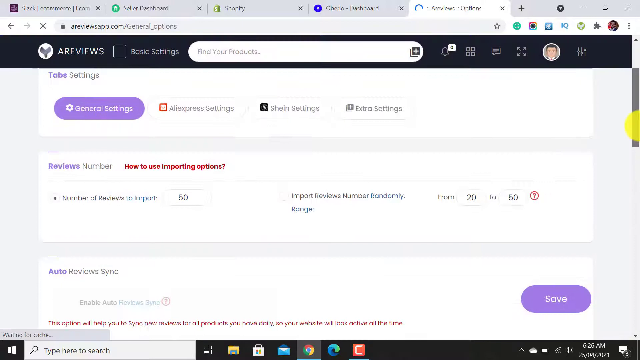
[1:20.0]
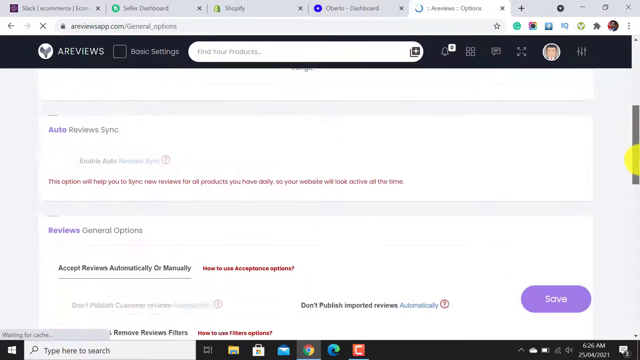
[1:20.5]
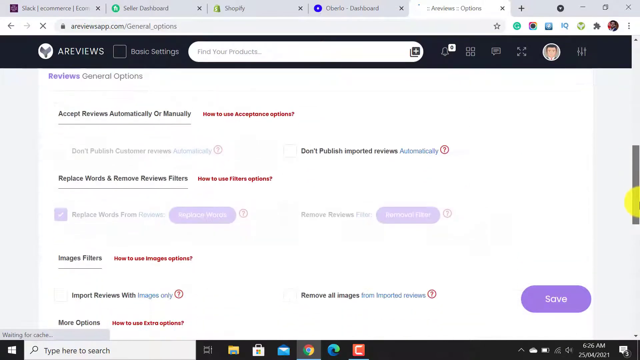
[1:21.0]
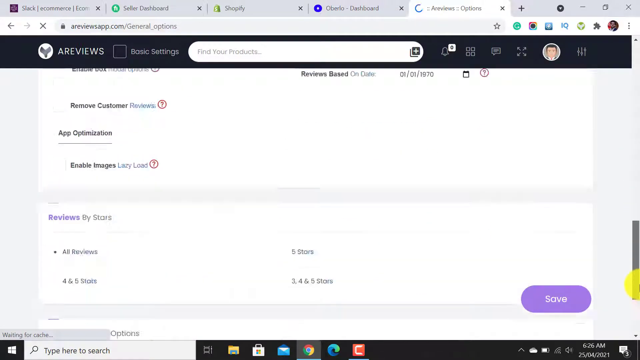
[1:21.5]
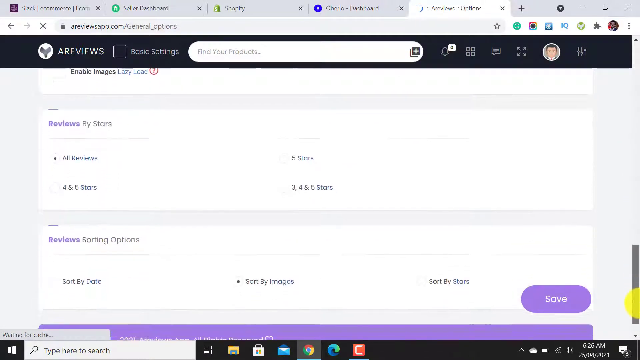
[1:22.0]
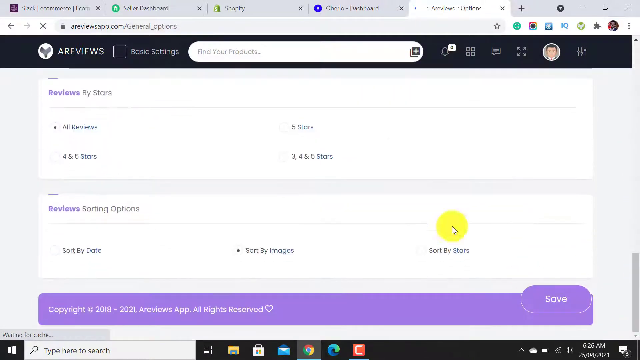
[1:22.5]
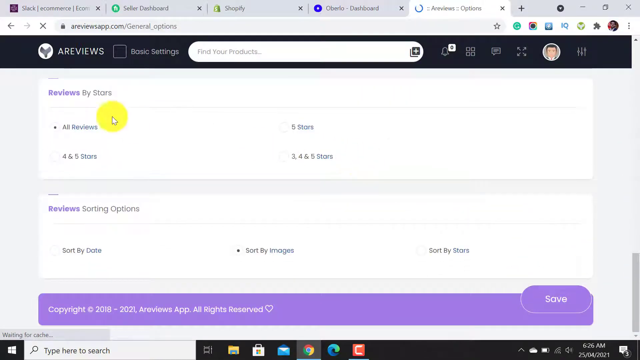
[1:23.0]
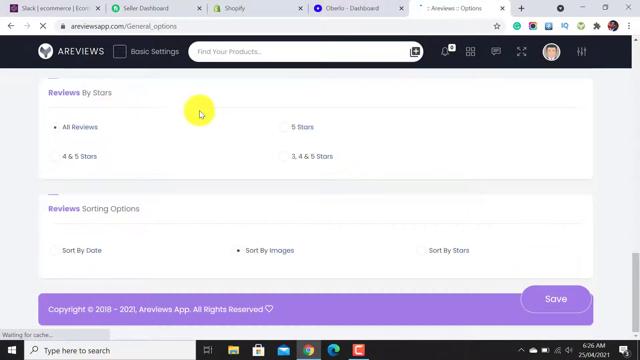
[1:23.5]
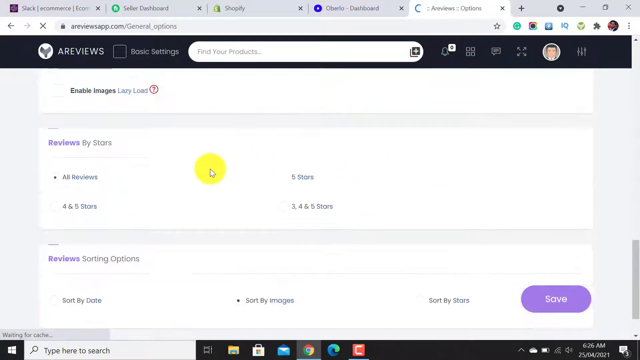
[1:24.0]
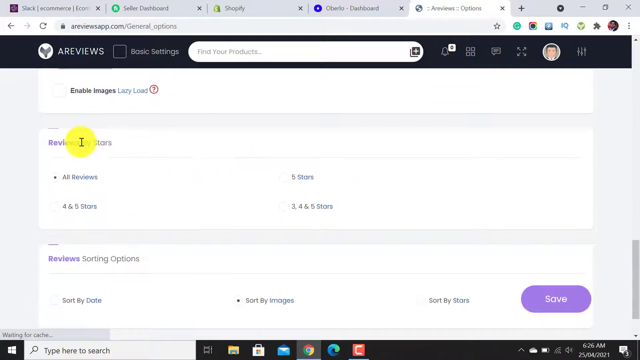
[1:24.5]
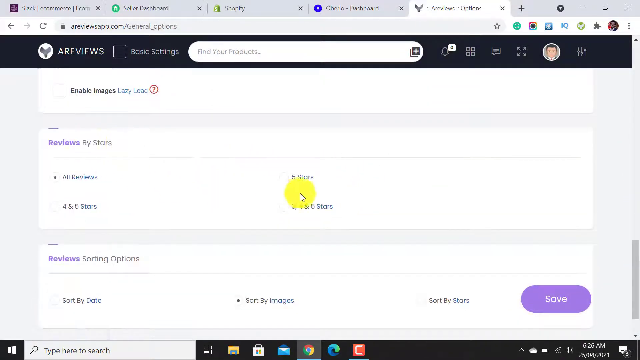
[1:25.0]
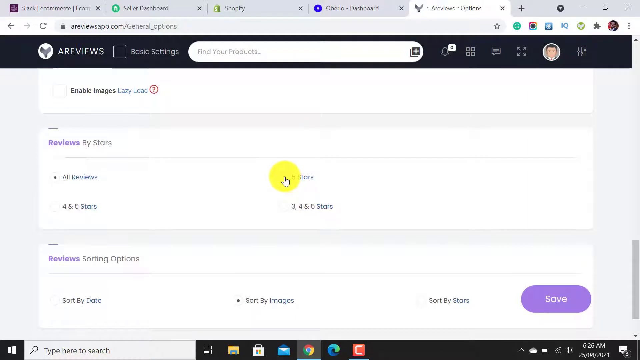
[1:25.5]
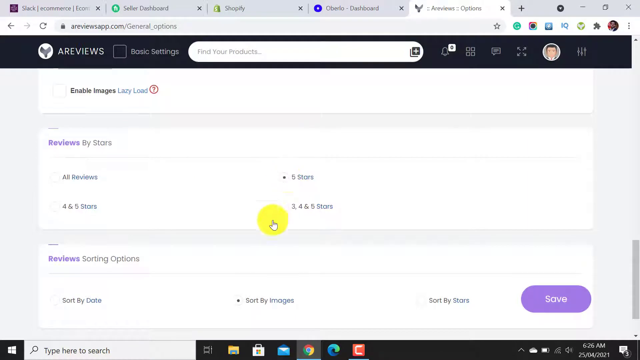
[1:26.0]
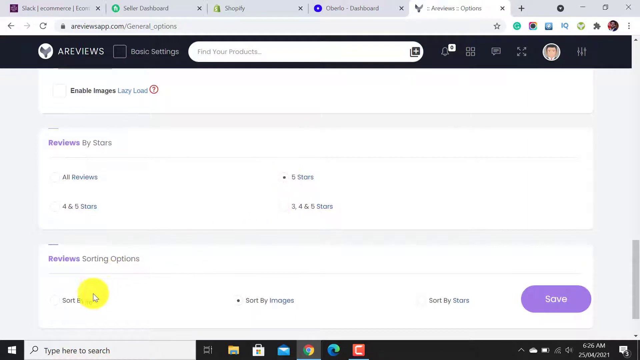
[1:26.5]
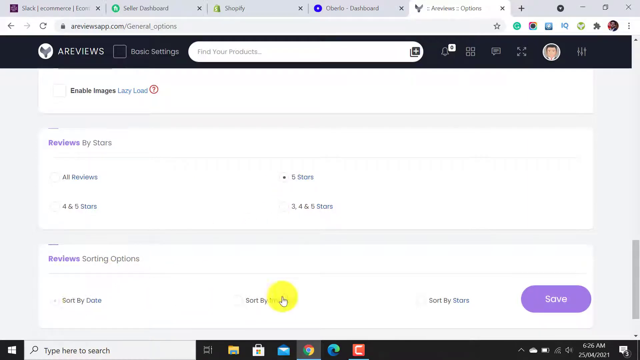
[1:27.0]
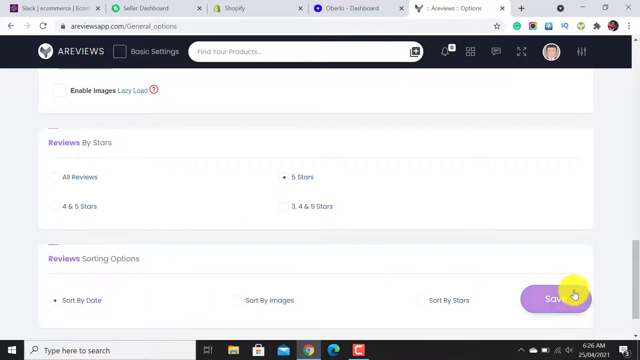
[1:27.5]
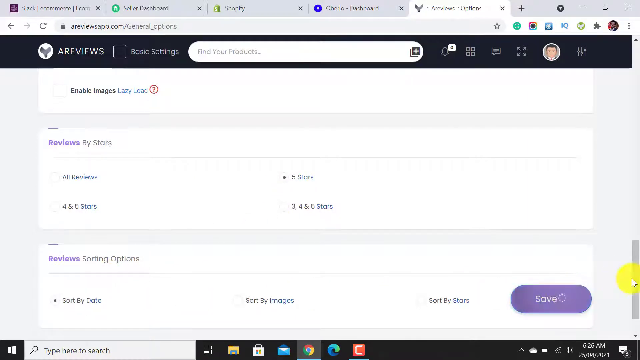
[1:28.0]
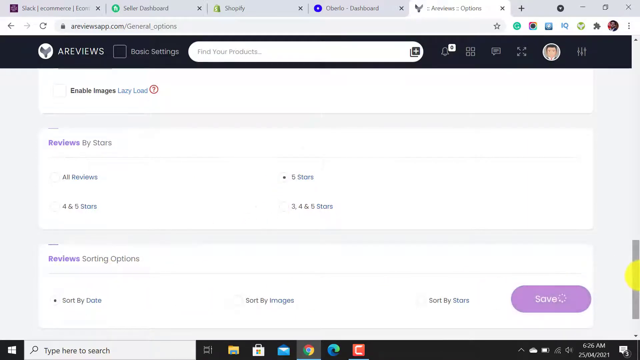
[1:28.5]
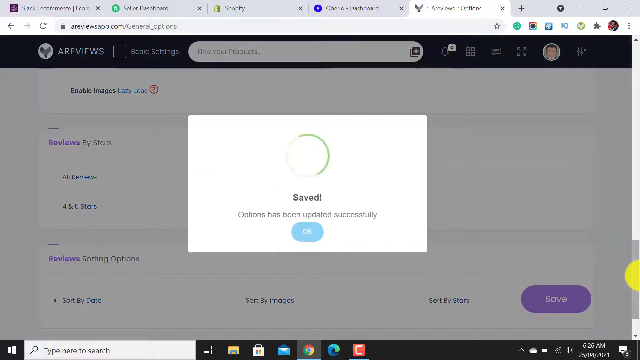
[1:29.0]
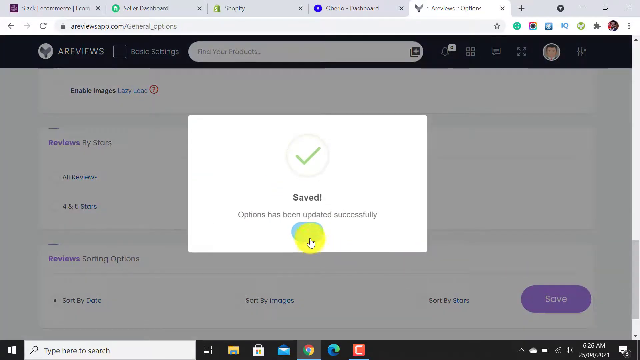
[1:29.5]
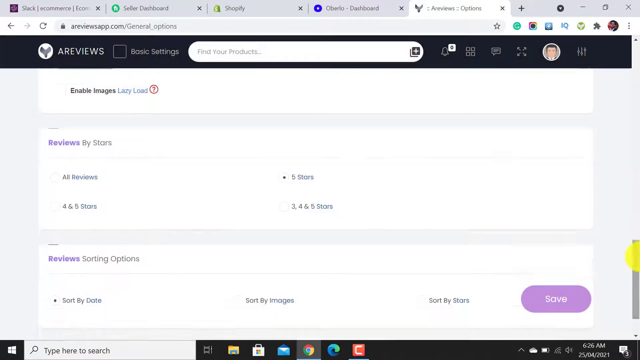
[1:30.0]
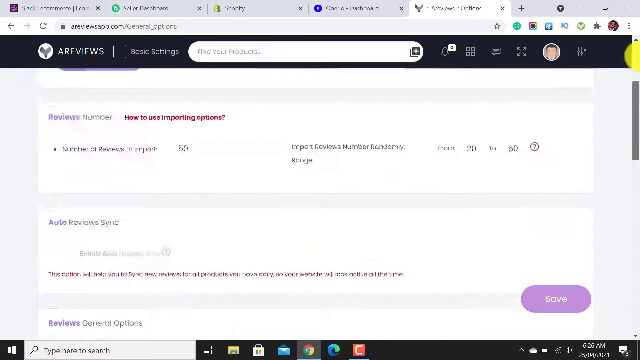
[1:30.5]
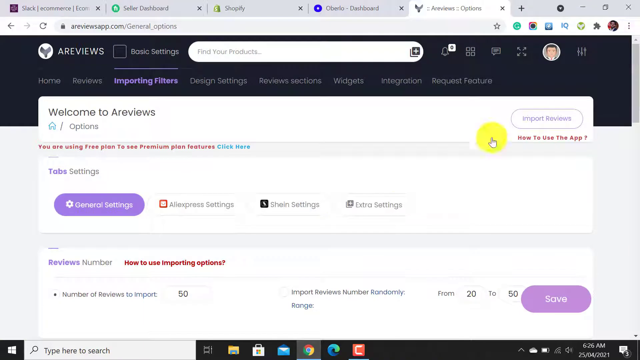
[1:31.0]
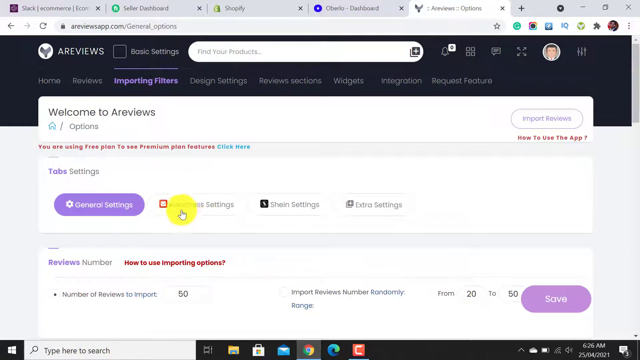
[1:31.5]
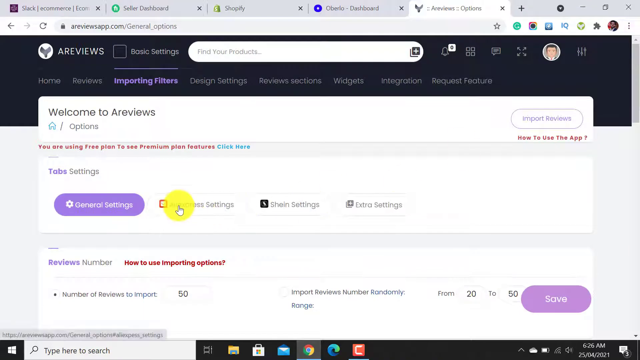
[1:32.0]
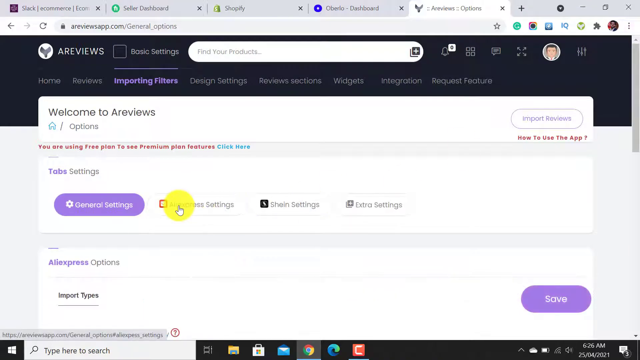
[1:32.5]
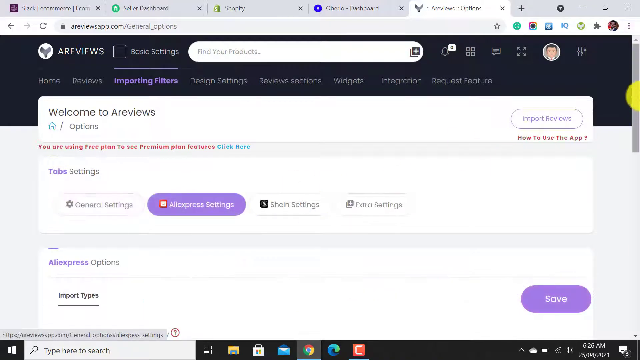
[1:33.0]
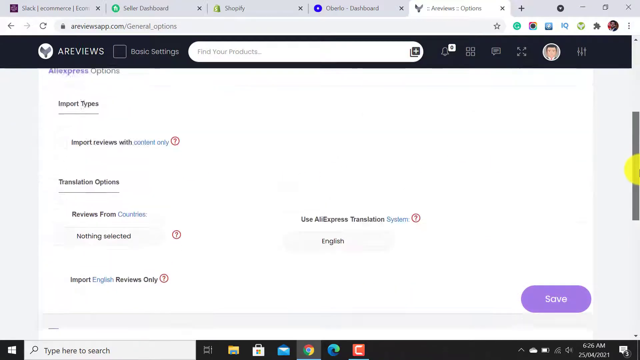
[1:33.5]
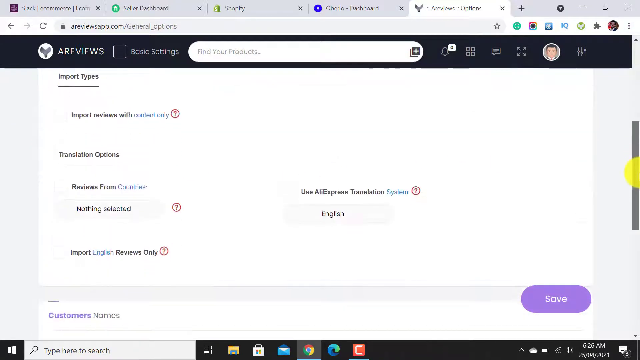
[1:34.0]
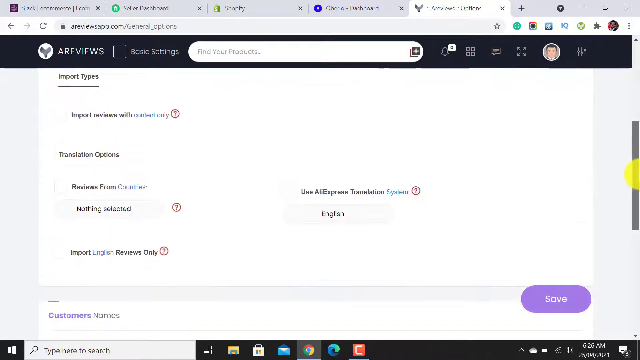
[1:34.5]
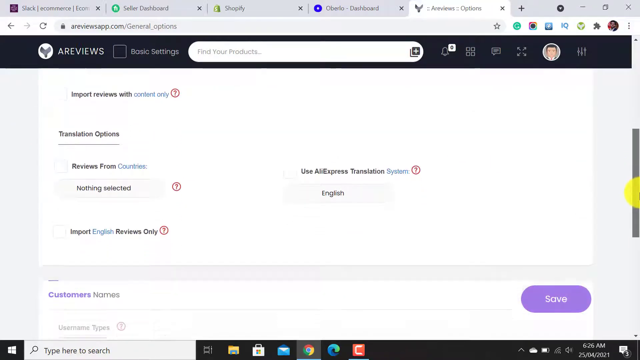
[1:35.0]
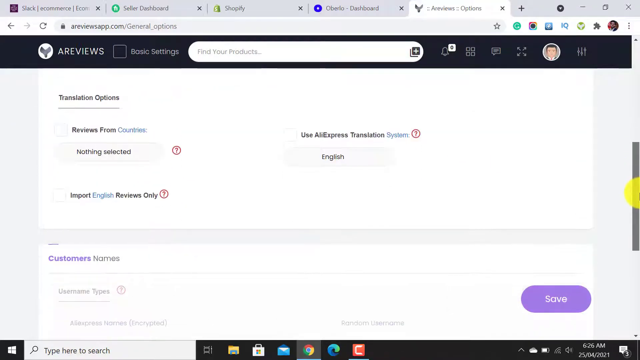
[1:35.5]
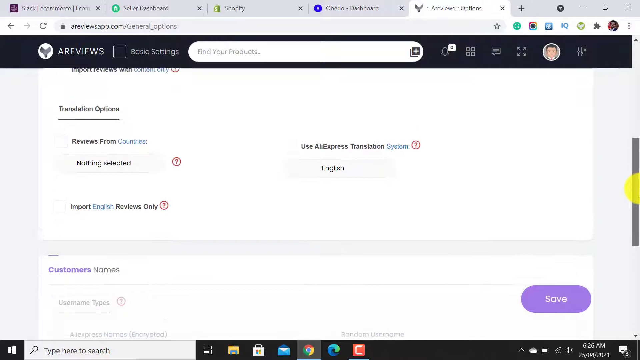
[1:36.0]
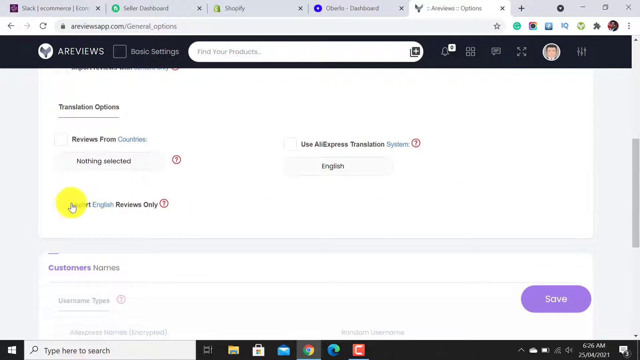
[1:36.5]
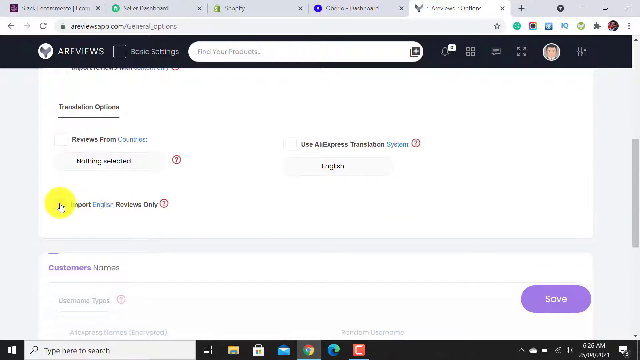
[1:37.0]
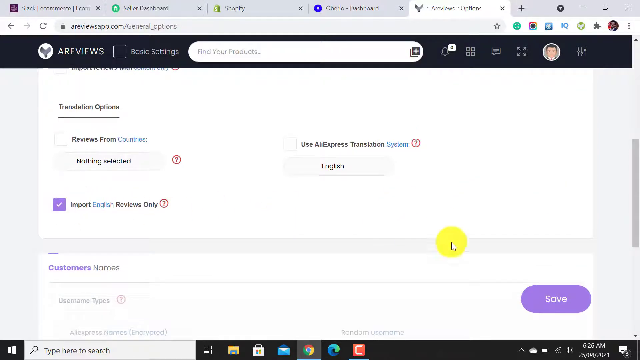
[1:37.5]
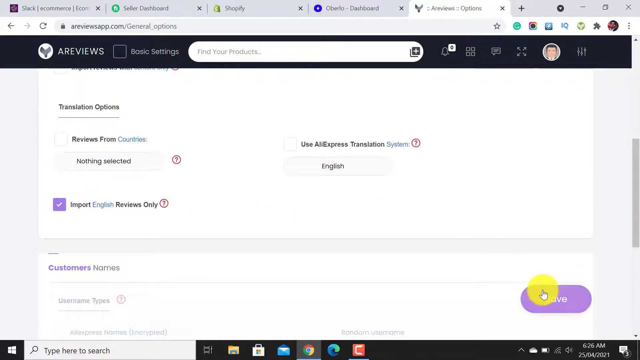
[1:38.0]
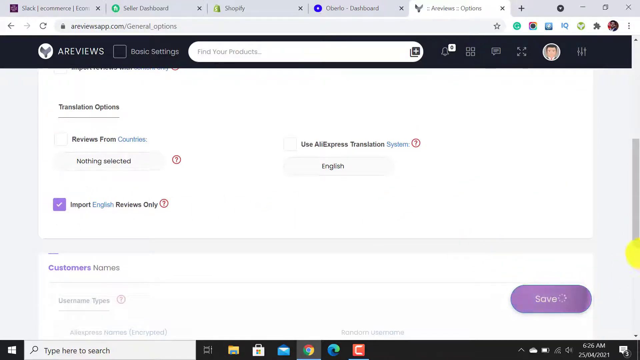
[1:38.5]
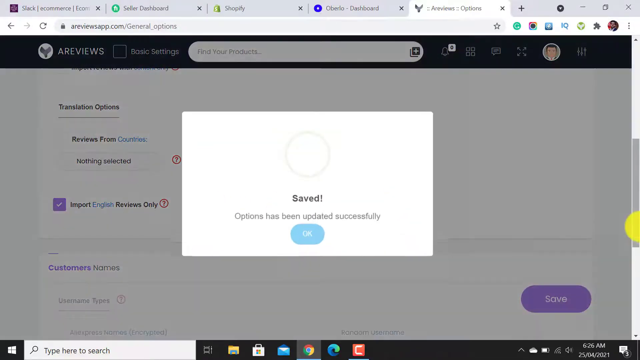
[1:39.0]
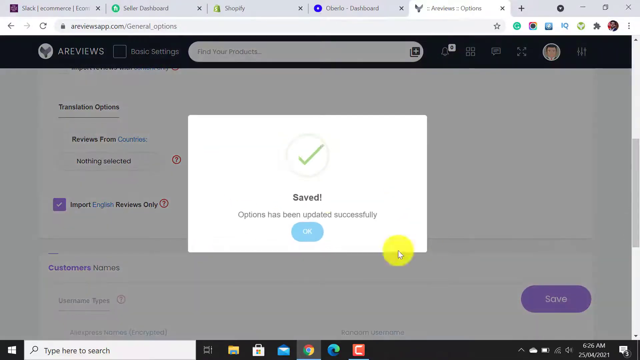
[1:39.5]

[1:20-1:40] The app page is shown and scrolled down to "reviews by stars," with options for all reviews, five stars, four and five stars, and three, four and five stars. Sorting options include sort by date, sort by image and sort by stars. Sort by date and five stars are selected, and the settings are saved with a purple button. A confirmation screen appears with a blue OK button. The user then goes to the Settings tab, AliExpress settings, selects "import English reviews only," and saves it, bringing up a confirmation screen with a blue button.